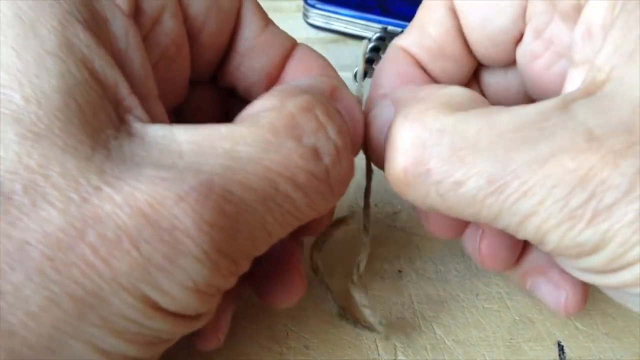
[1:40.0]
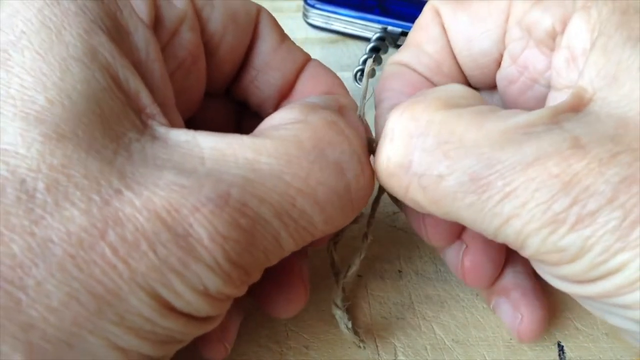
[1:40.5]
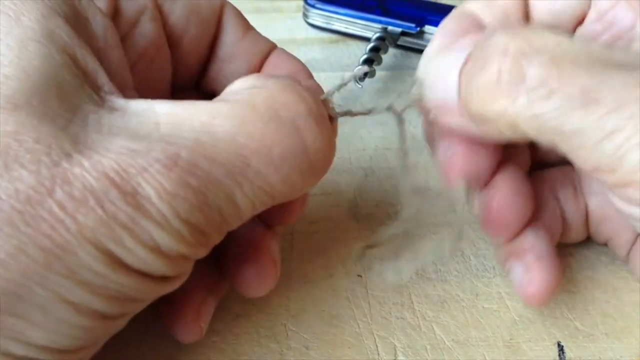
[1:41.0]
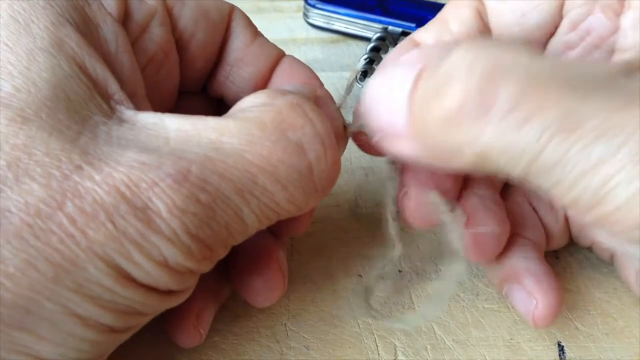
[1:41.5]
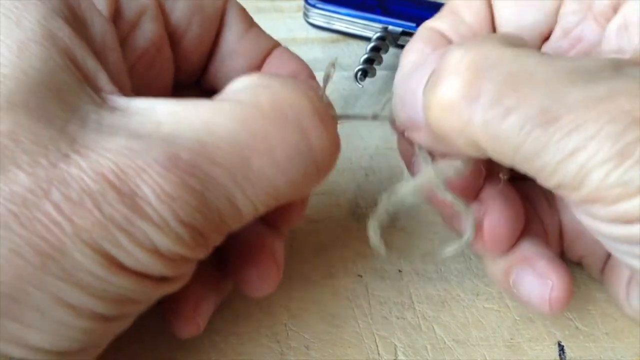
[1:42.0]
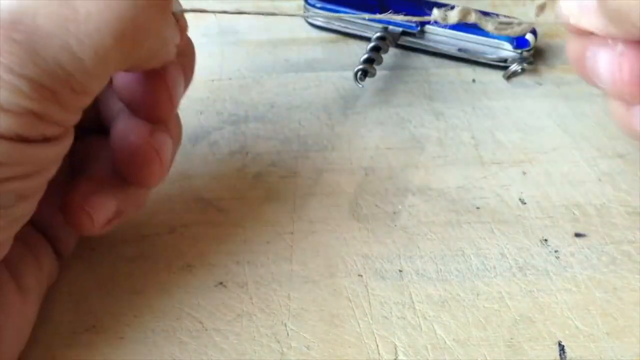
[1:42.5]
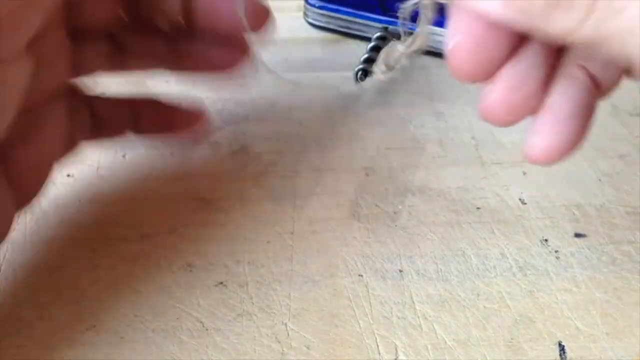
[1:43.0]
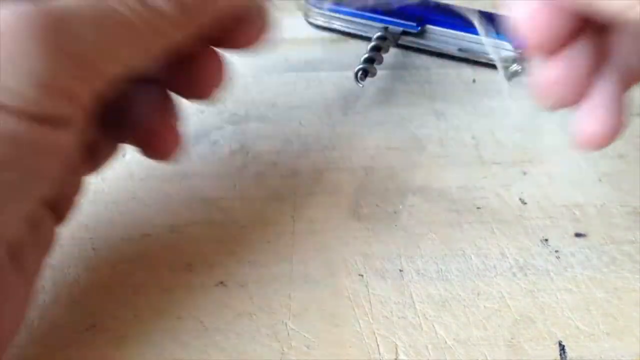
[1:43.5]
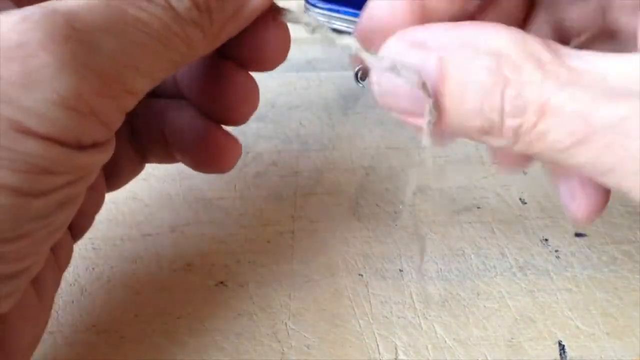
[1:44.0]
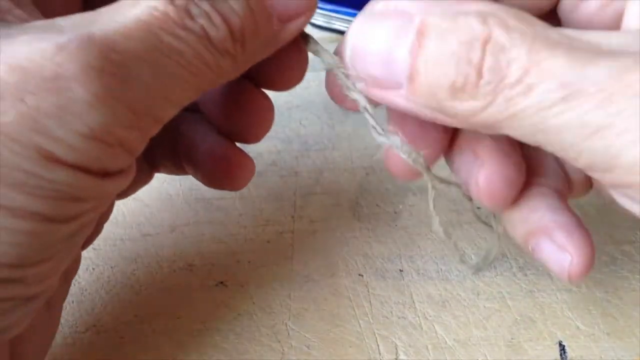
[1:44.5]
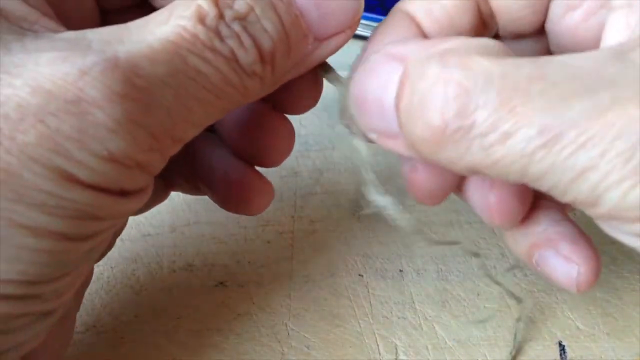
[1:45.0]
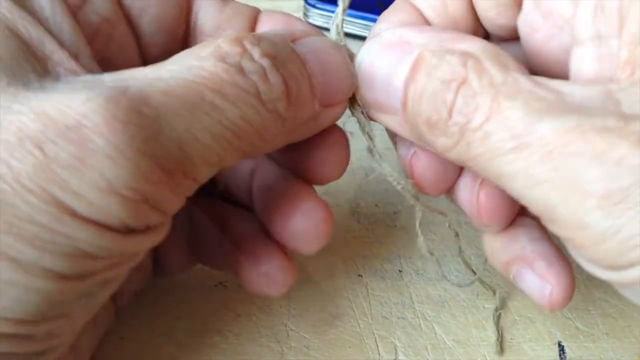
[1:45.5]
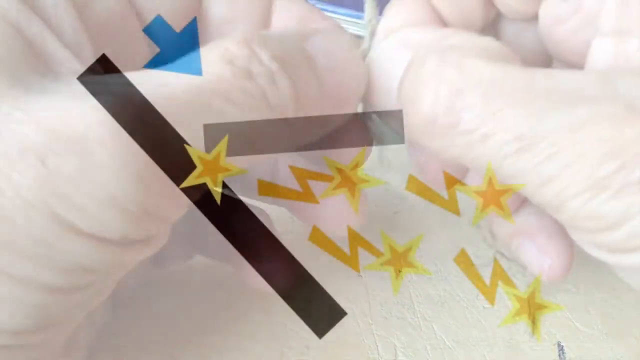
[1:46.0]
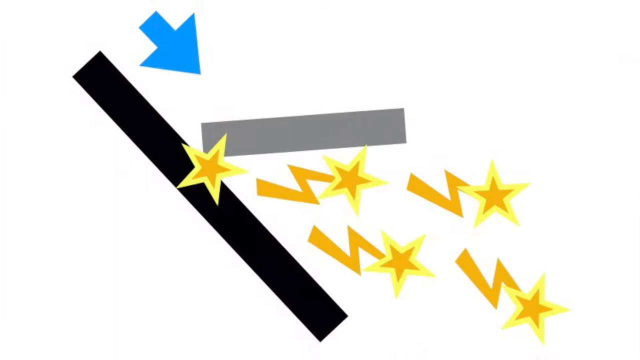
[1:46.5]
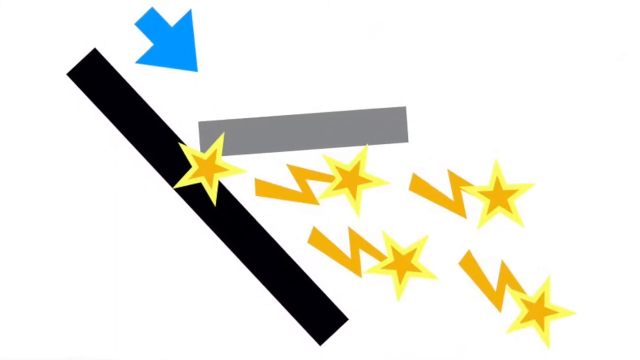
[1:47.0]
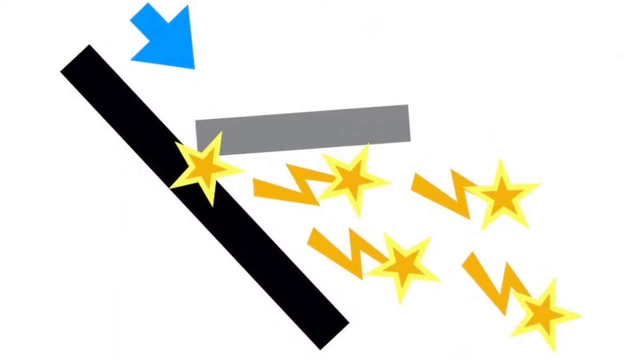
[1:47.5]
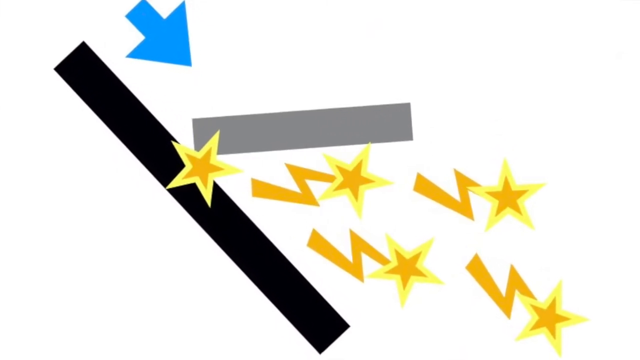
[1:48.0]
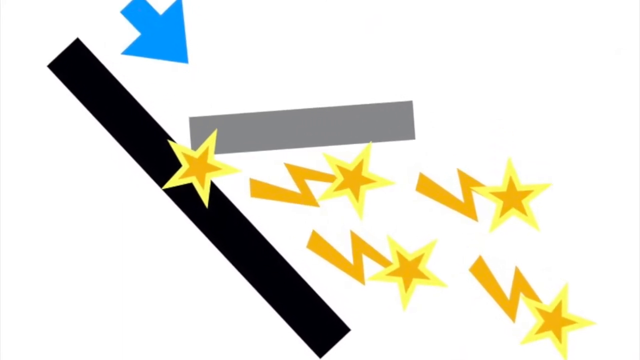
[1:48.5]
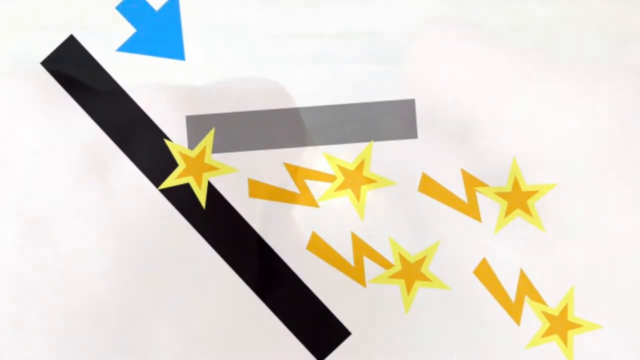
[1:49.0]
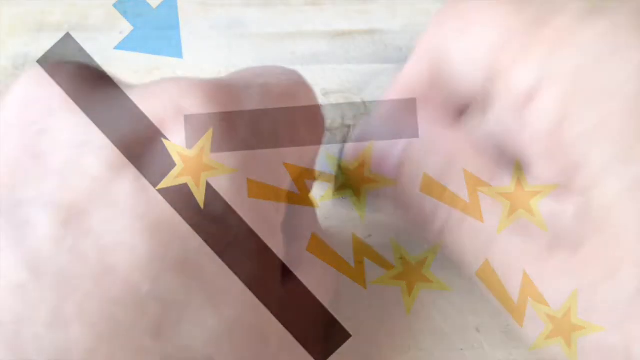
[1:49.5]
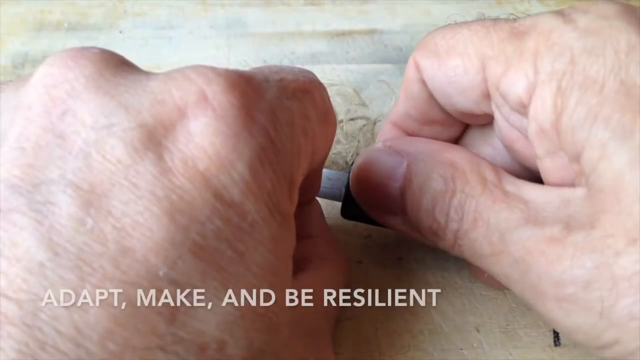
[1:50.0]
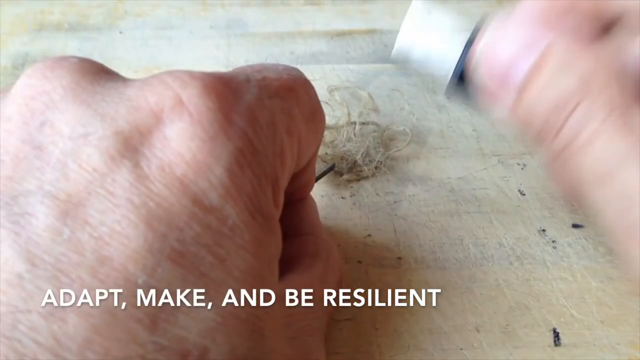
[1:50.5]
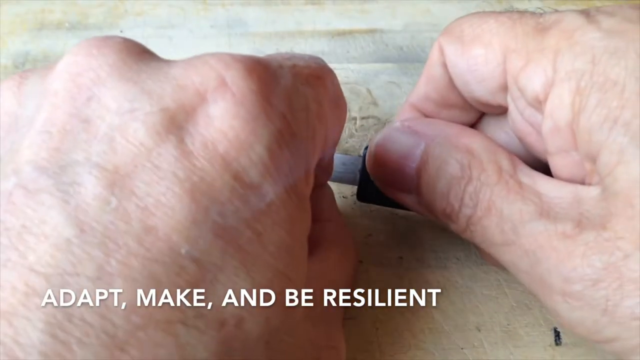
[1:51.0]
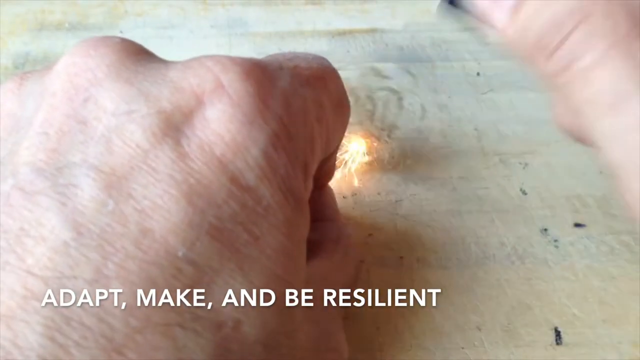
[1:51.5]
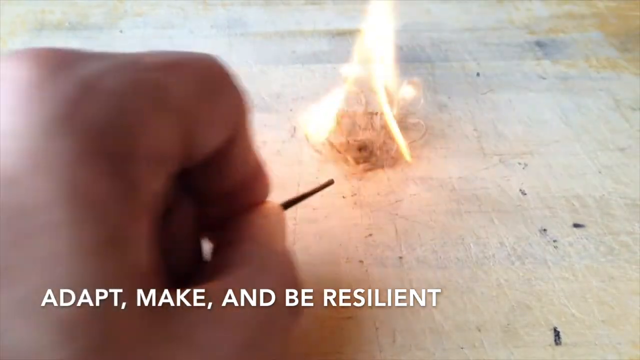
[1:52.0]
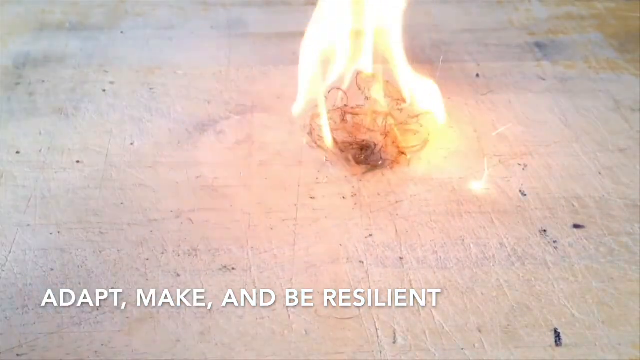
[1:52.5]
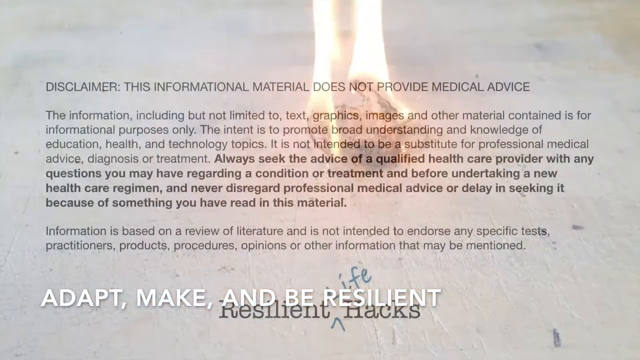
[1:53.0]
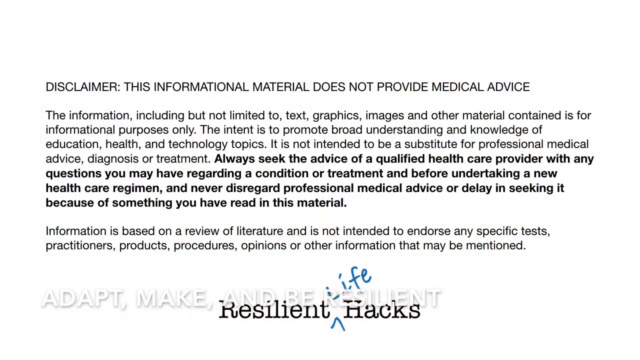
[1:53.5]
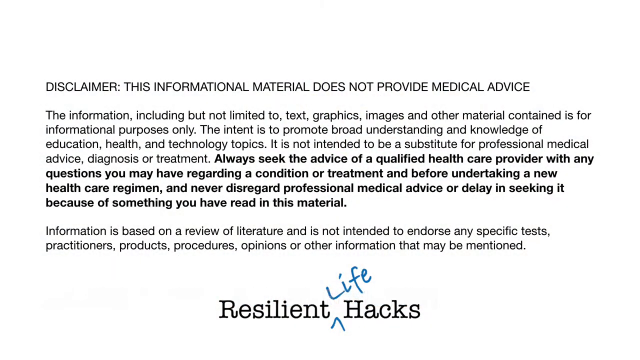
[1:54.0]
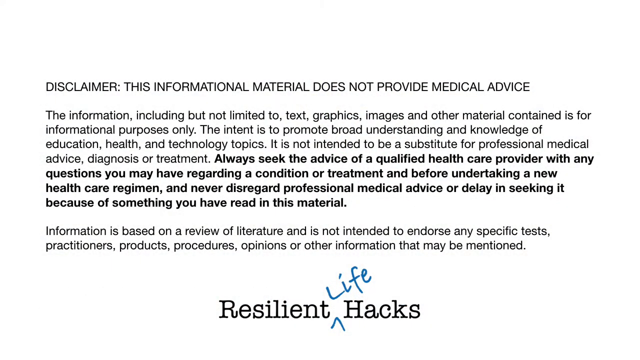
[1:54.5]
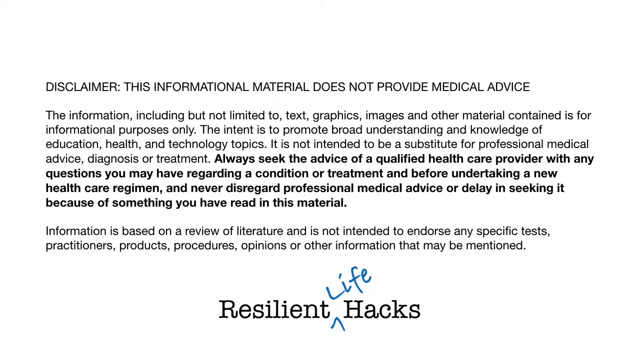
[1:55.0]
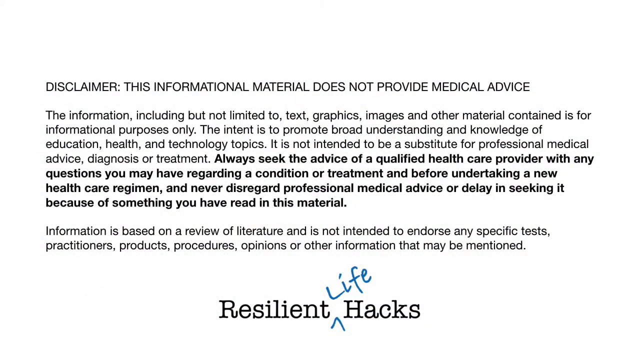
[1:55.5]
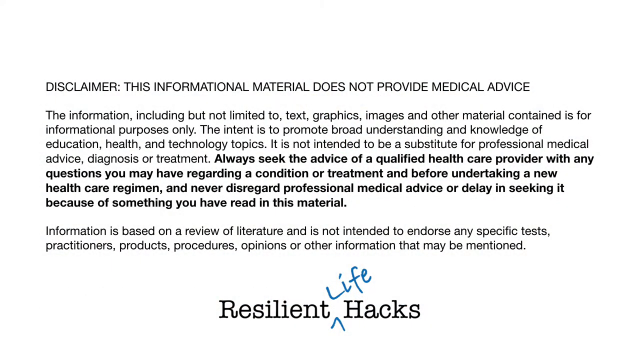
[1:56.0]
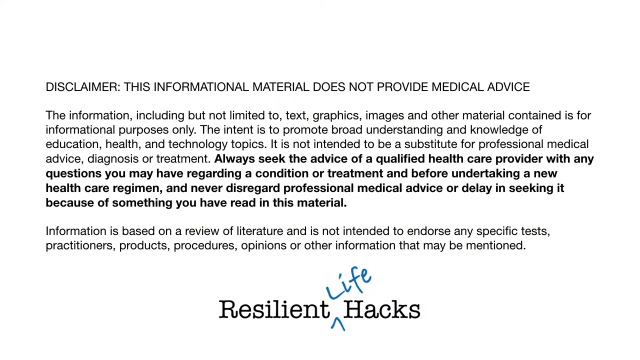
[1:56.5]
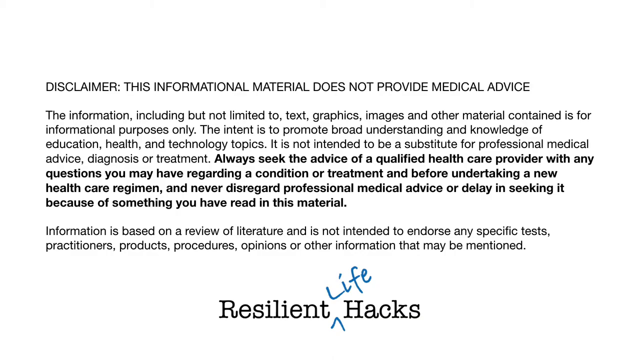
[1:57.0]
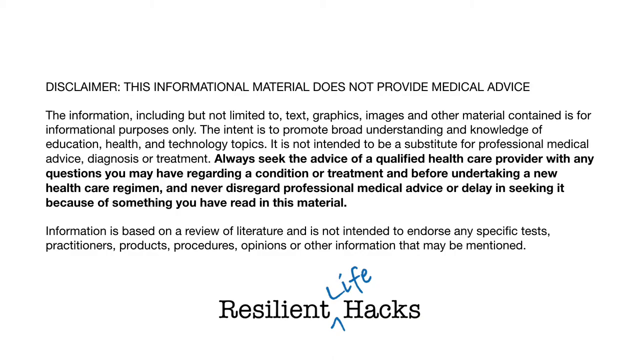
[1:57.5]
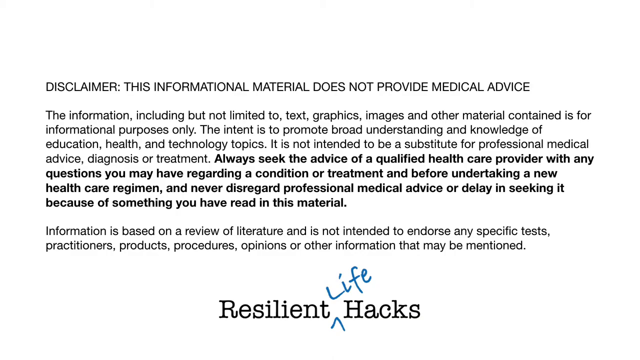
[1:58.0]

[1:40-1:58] The elder man tries to tear out a piece of the yarn on the corkscrew. He then shows a visualization of how the test will proceed: a black element, a blue arrow pointing down, and sparks. The yarn is what catches fire, while the ferrocerium is rubbed with some material. The last part reads "Adapt, Make and Be Resilient." The man rubs the ferrocerium with some material and makes a fire on the yarn. At the end, information text appears: "This informational material does not provide medical advice. And the information is based on a review of literature and is not intended to endorse any specific tests, practitioners, products, procedures, opinions on other information that might be mentioned." followed by "Resilient Life Hacks."